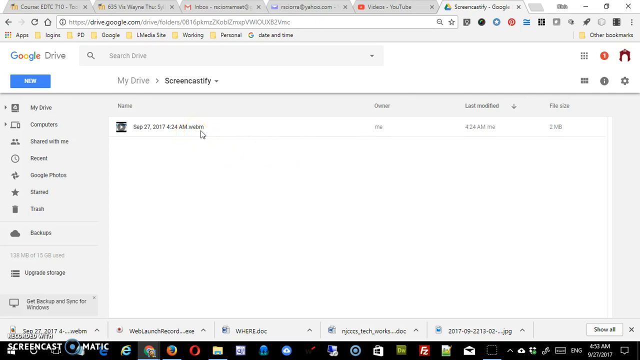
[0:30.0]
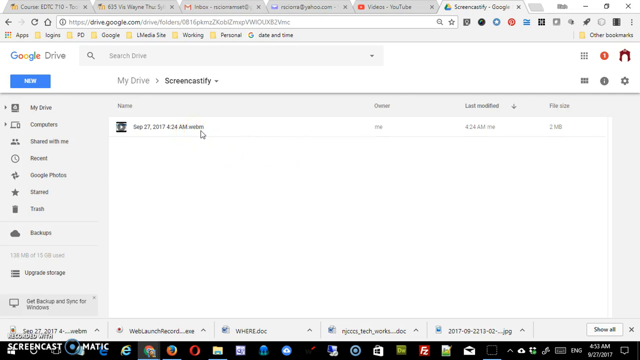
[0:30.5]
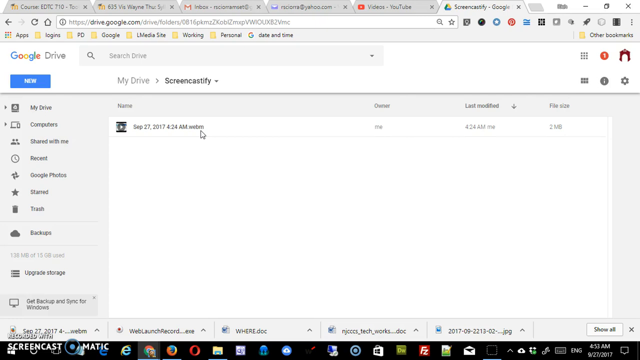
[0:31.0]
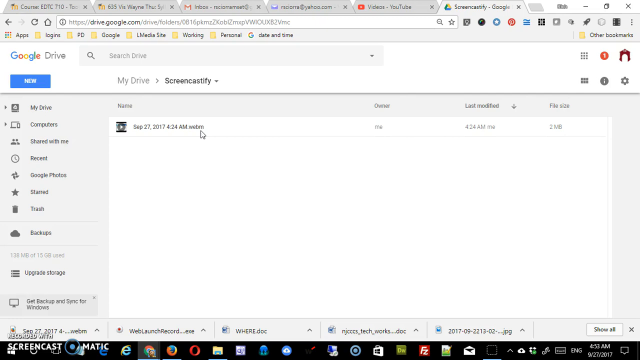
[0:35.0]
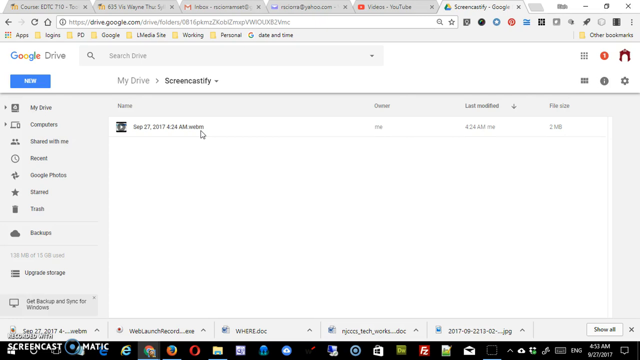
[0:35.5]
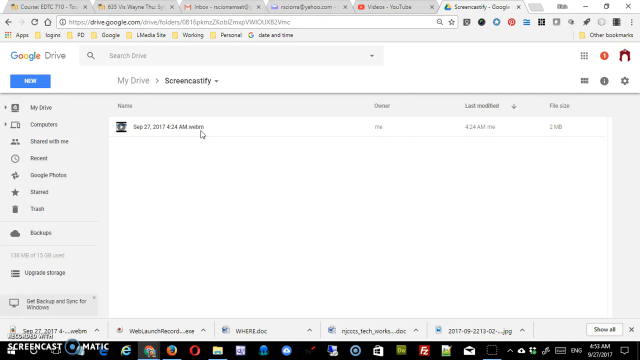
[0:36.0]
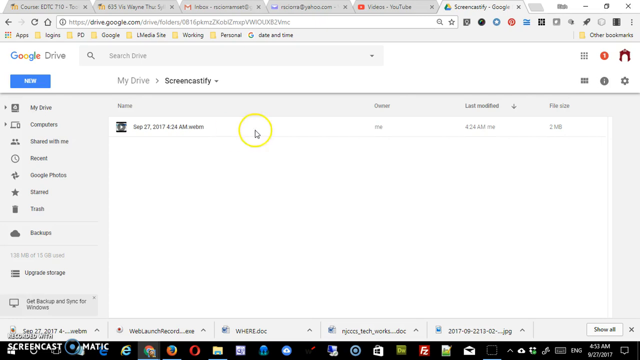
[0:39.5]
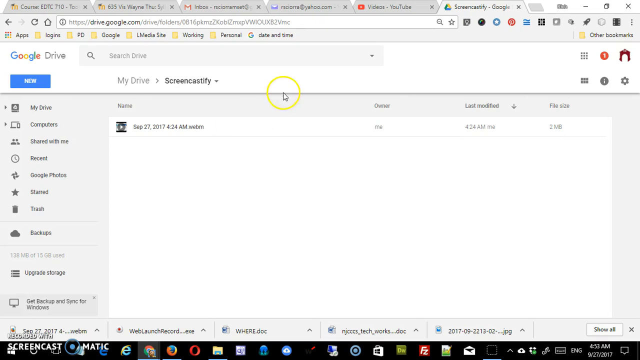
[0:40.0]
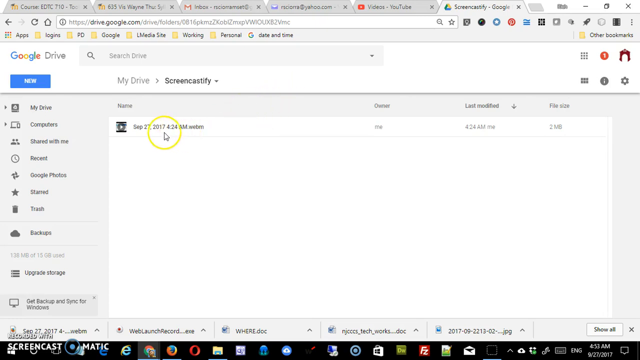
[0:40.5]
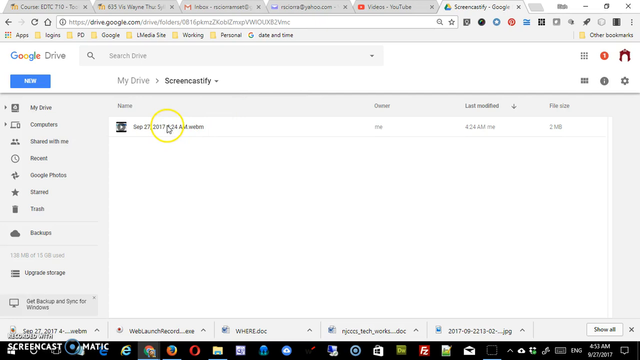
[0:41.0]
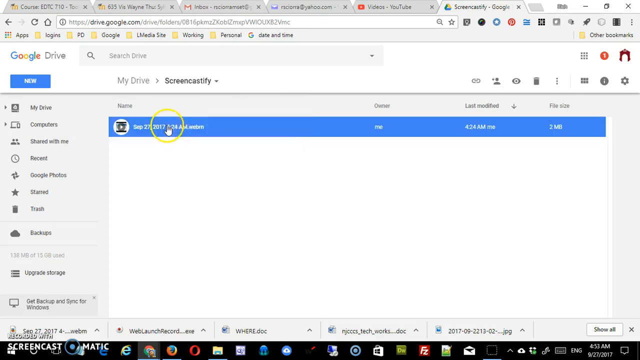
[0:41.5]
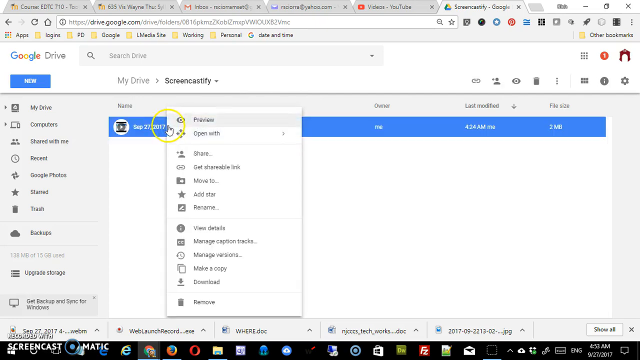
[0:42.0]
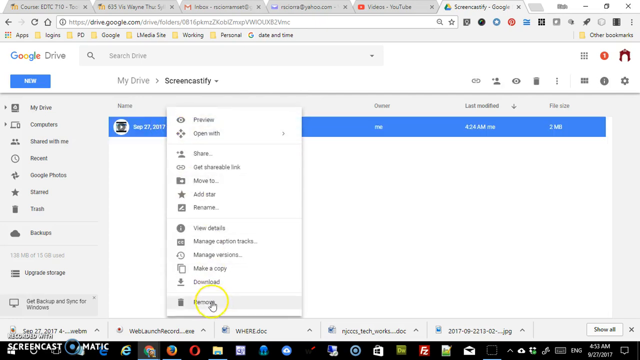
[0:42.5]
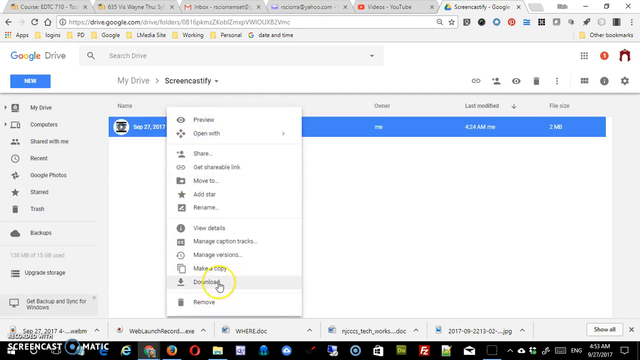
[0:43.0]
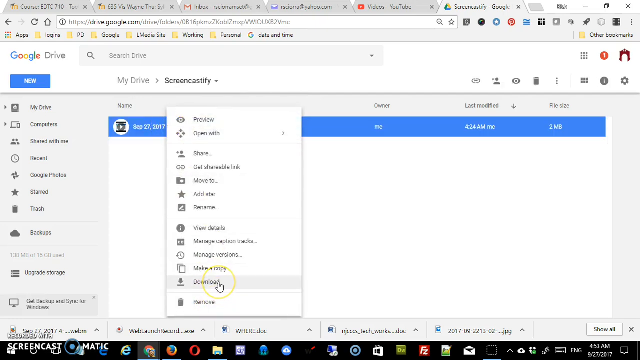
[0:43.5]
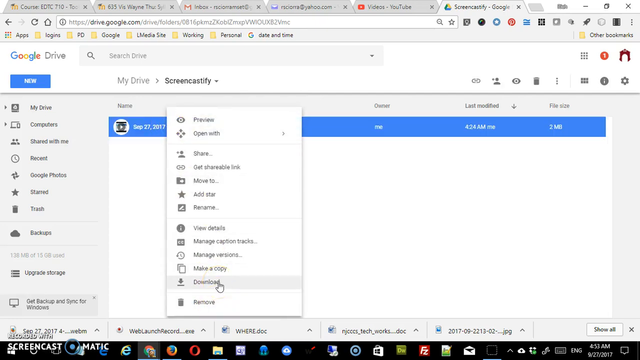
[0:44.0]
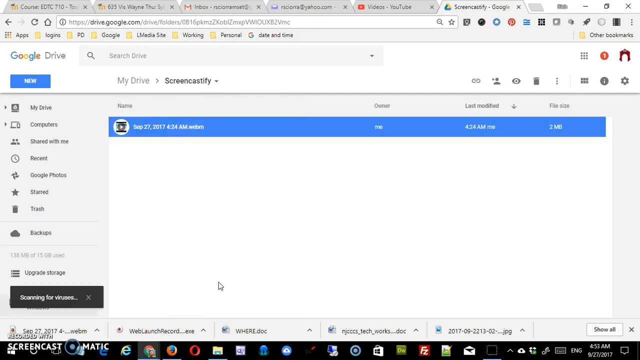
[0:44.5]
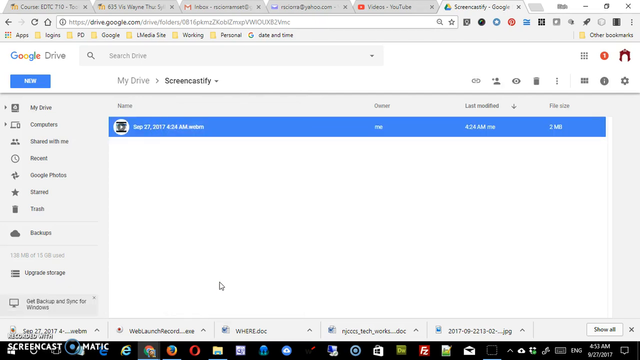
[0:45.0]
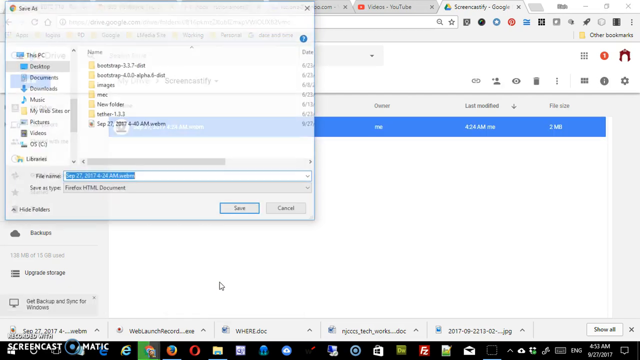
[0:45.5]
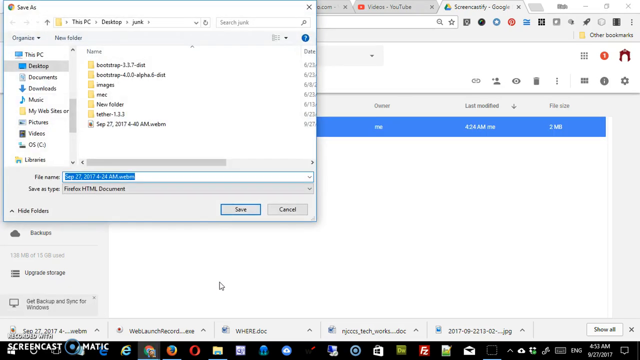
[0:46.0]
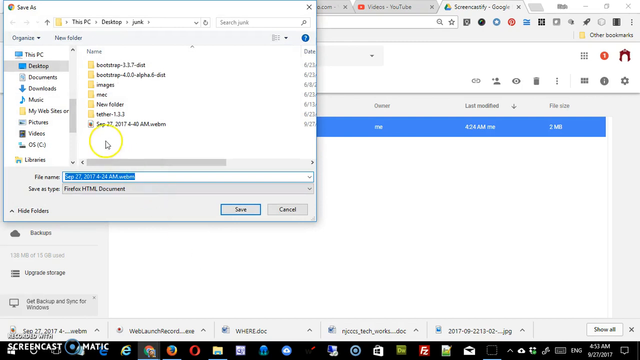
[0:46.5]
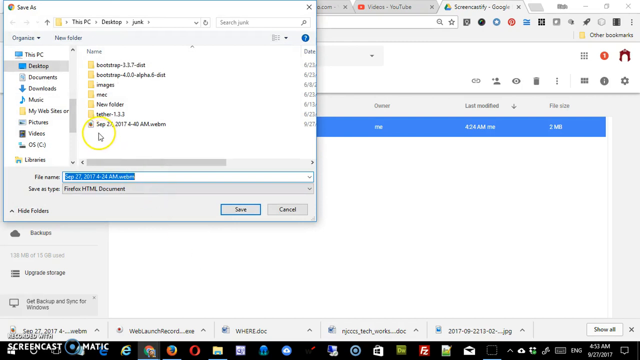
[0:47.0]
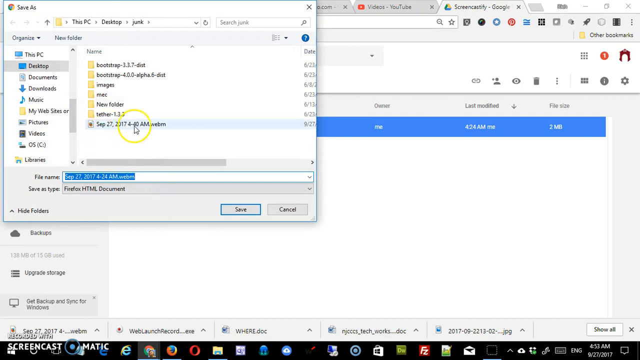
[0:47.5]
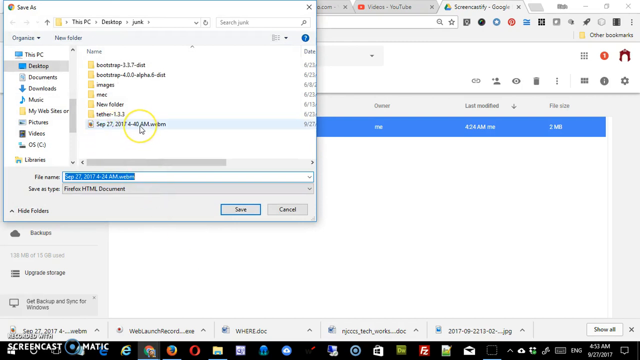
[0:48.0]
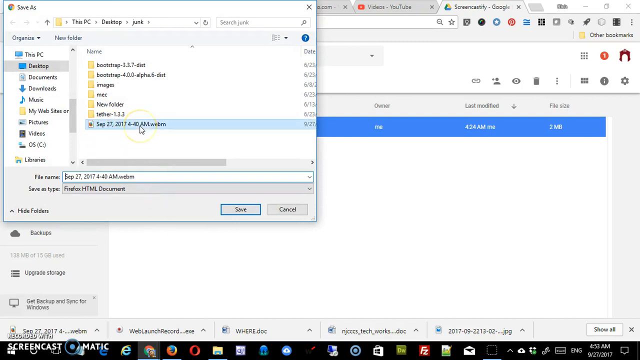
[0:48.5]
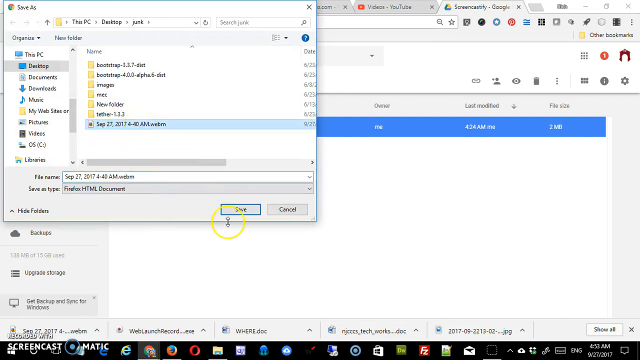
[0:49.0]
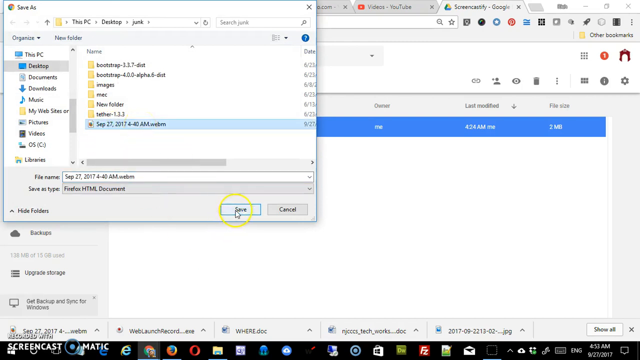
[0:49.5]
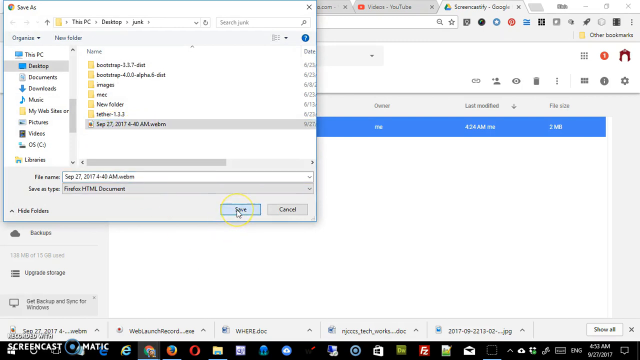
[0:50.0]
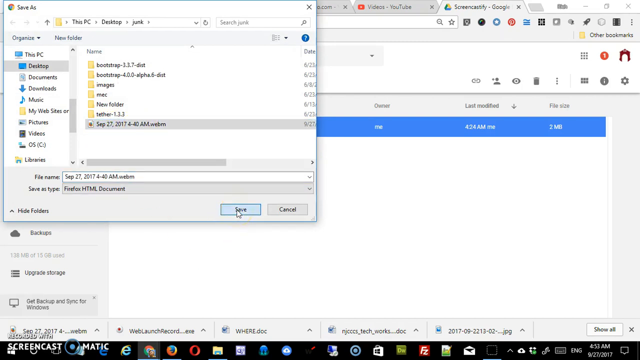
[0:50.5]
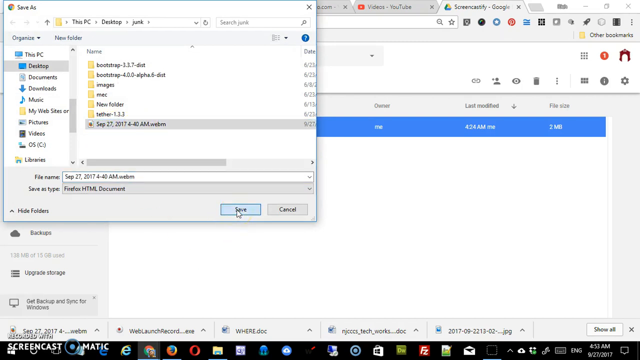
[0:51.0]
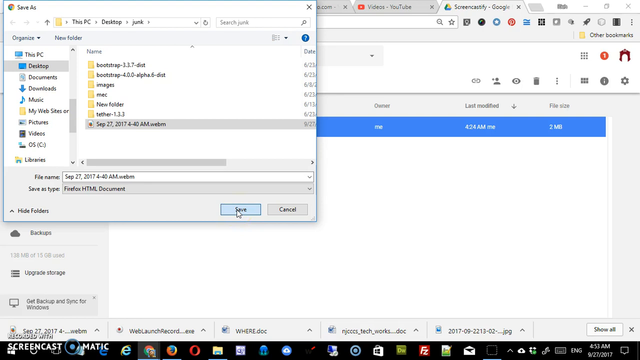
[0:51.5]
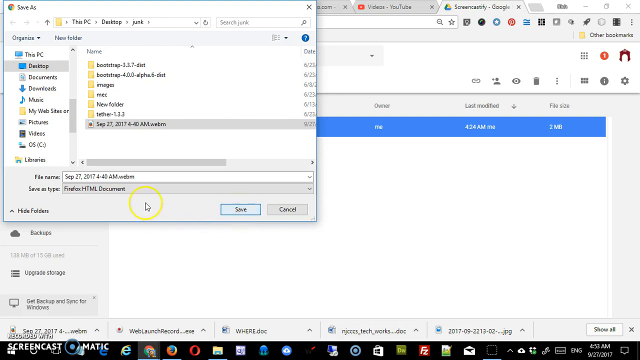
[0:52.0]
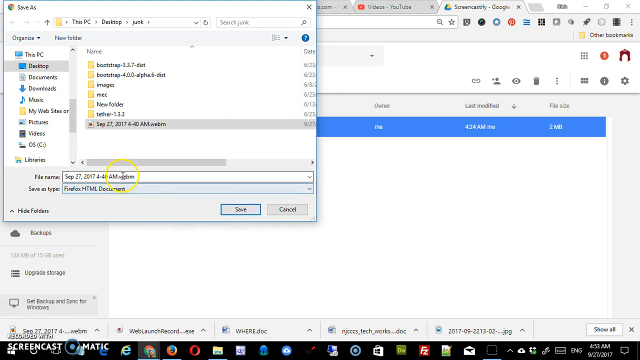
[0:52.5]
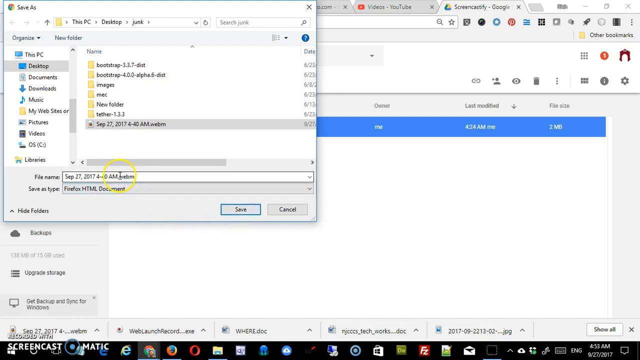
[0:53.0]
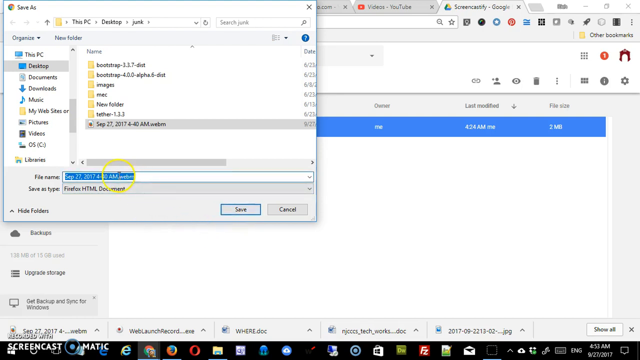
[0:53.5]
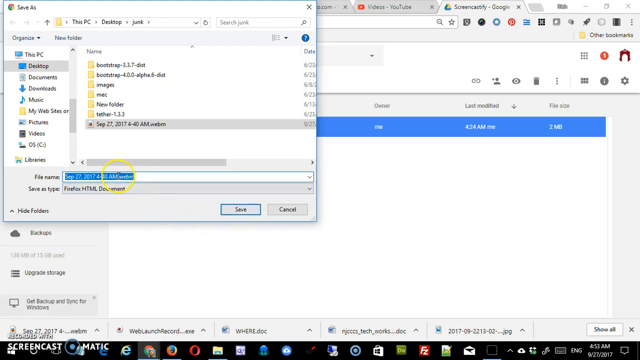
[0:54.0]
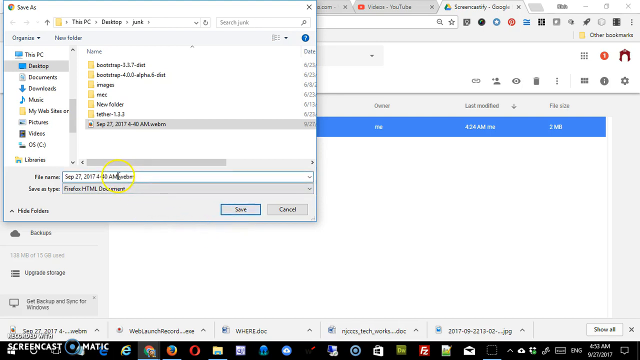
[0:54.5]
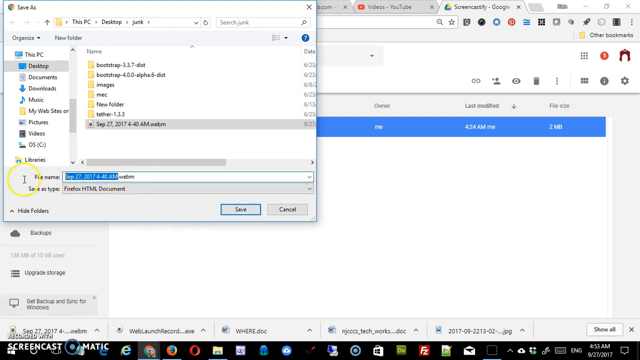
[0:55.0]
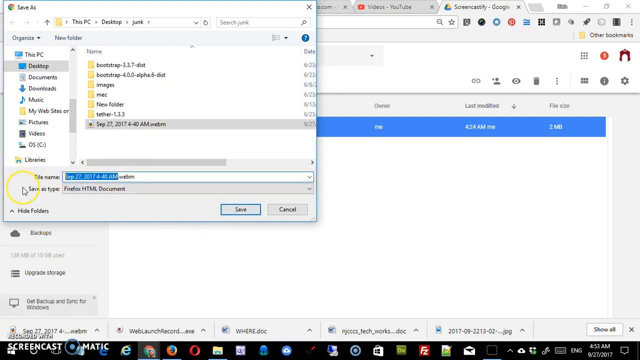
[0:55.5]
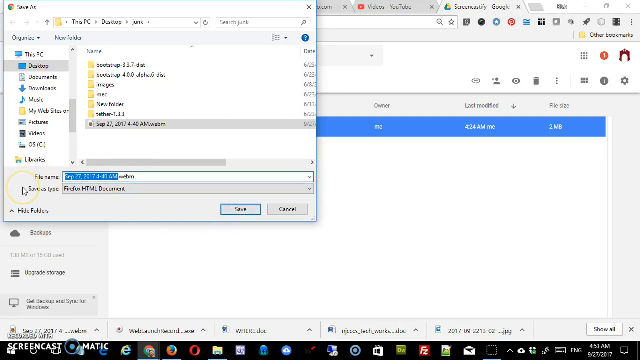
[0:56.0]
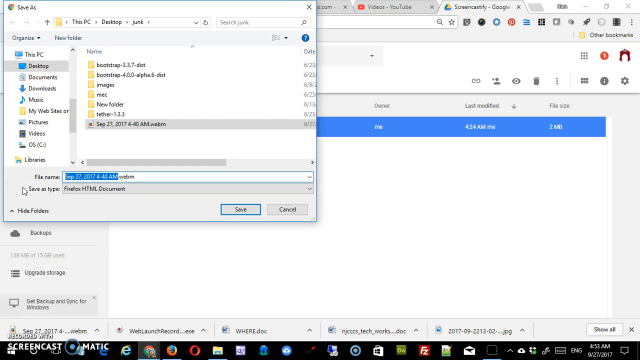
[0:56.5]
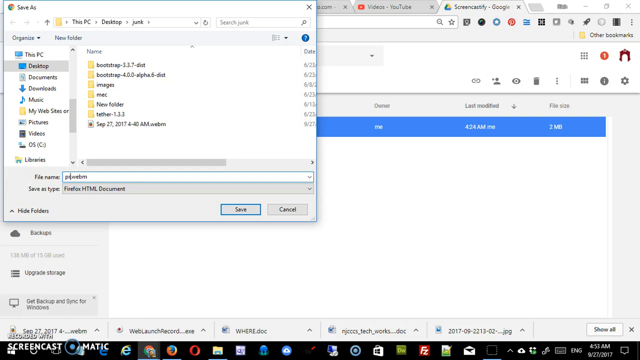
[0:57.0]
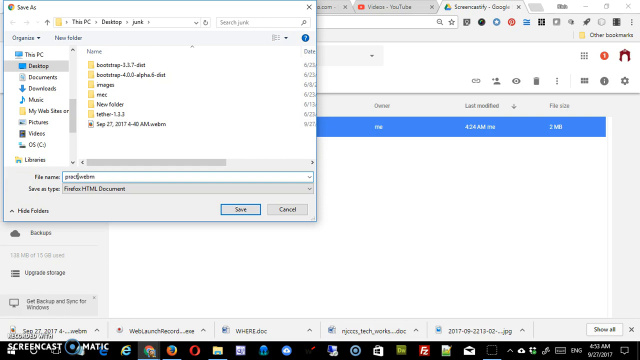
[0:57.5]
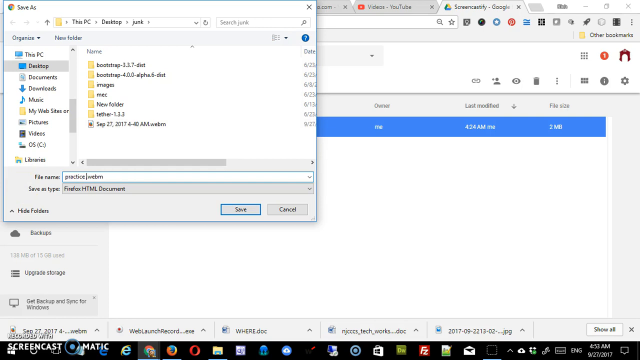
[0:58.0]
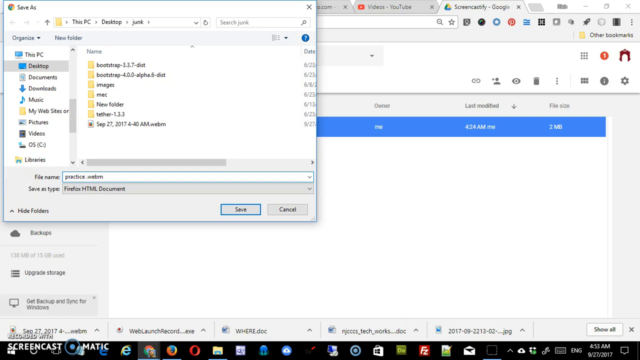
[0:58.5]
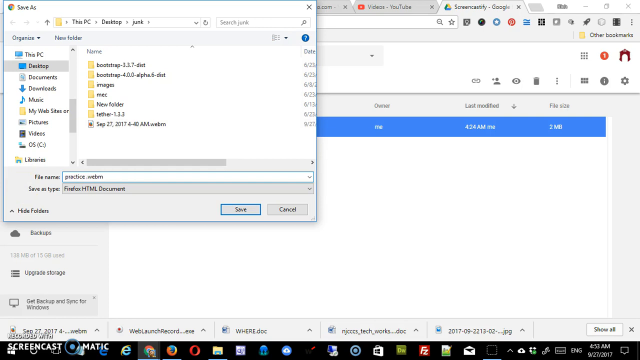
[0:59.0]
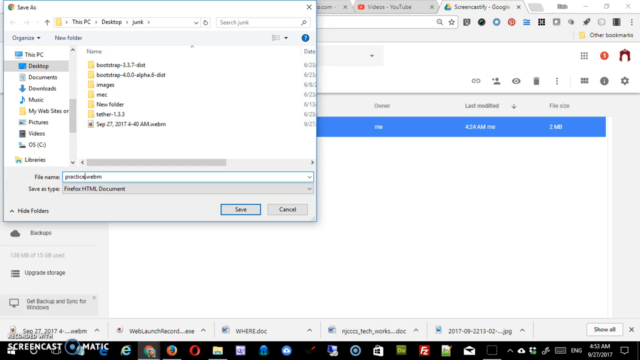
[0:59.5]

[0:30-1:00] The open Google Drive folder is still on the desktop. The mouse hovers over a single file, the only file showing in the drive, and a yellow circle appears around the mouse. The person appears to right-click the file, opens it, changes the name and saves it as something else. After saving, it looks like they rename it and zip it into another folder, possibly moving it from Google Drive back to their computer. Icons that look like an armored helmet or a tent, an icon that looks like an exclamation icon, and a gear for settings are visible along the top of the drive area.